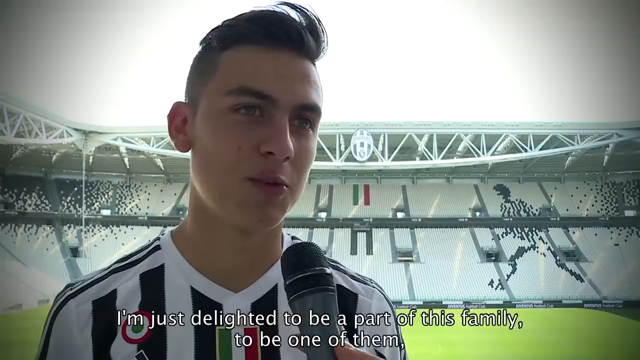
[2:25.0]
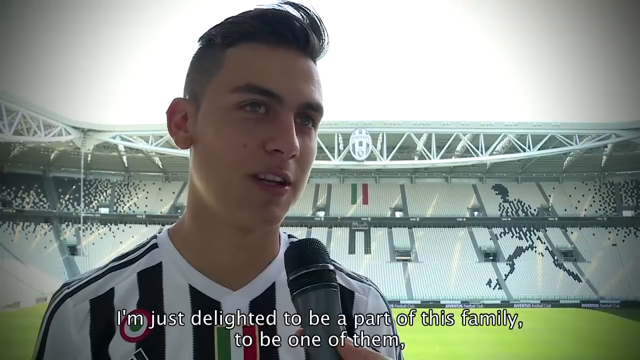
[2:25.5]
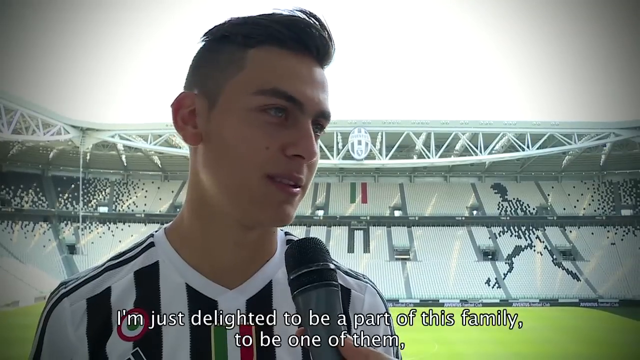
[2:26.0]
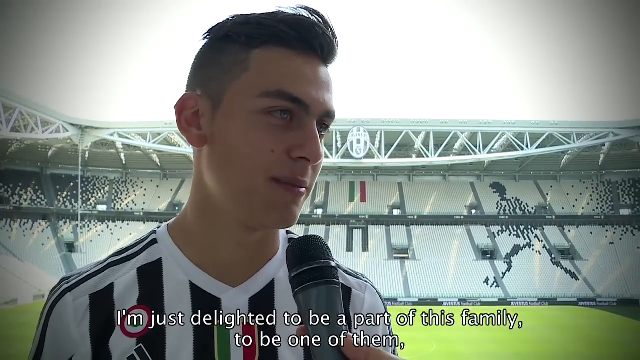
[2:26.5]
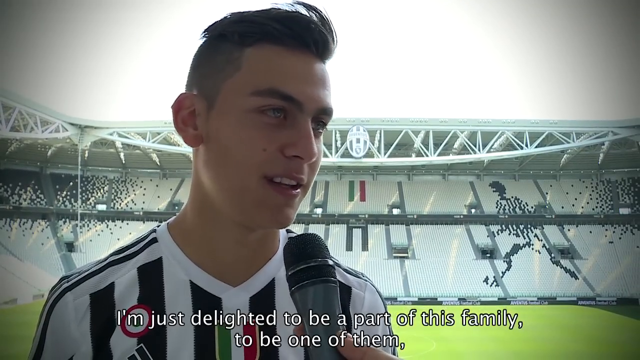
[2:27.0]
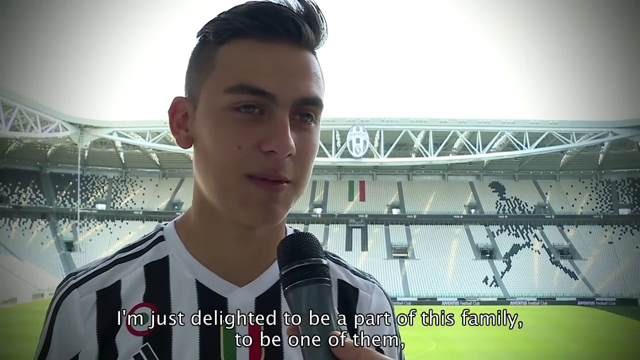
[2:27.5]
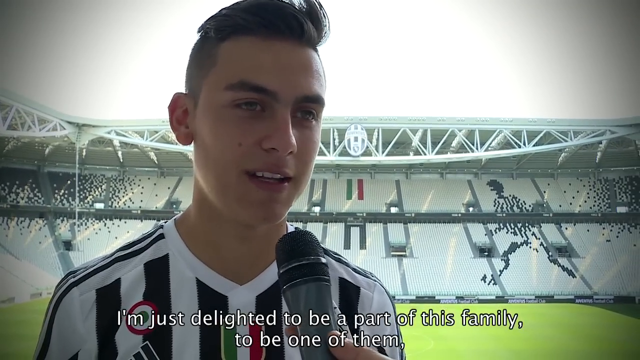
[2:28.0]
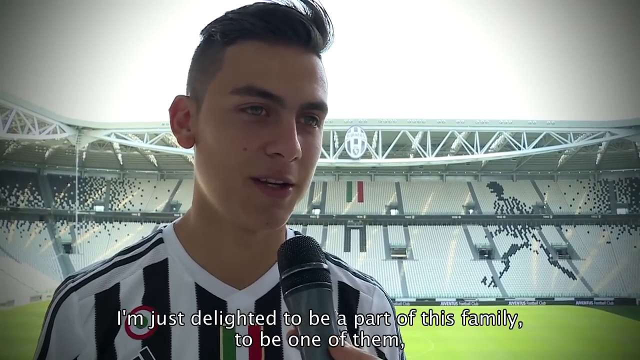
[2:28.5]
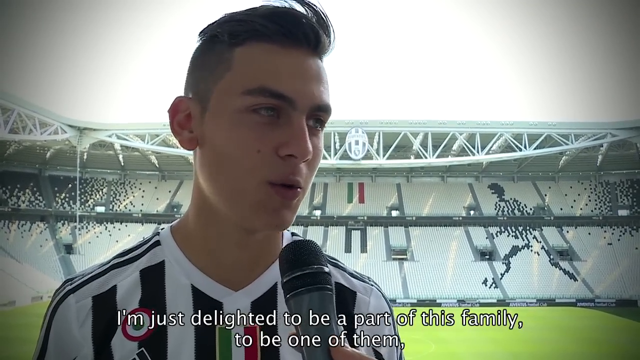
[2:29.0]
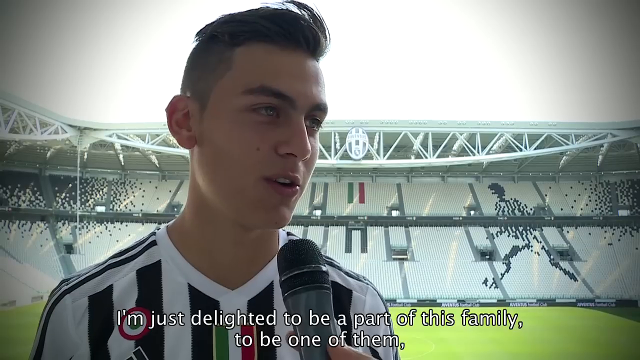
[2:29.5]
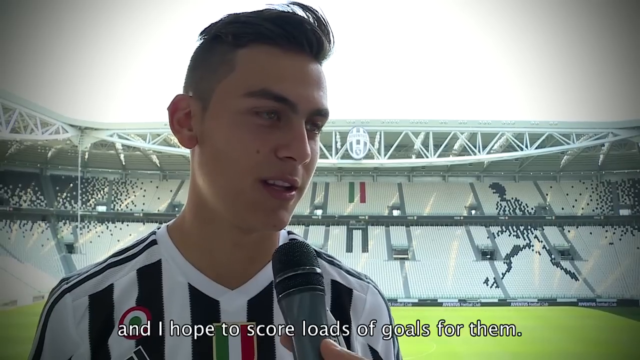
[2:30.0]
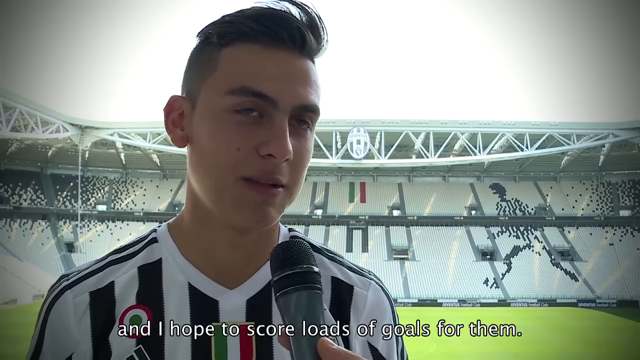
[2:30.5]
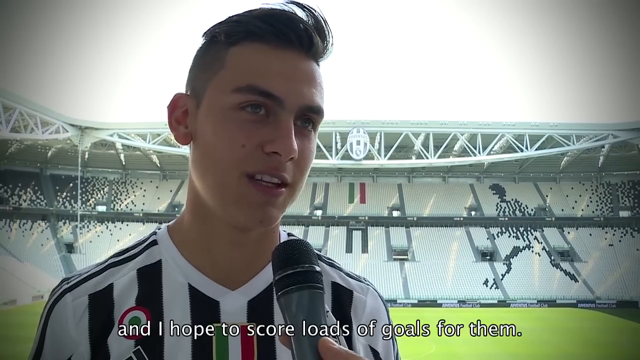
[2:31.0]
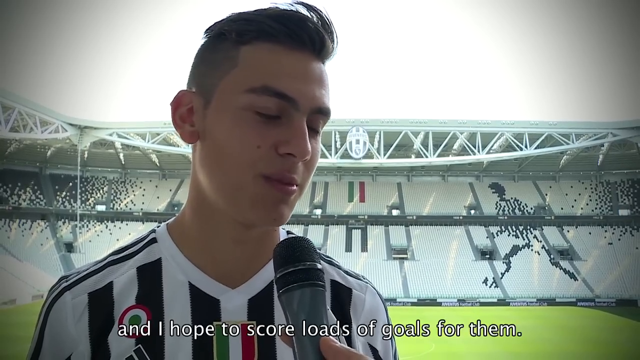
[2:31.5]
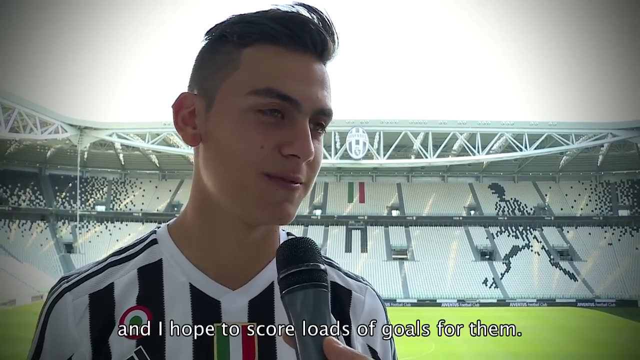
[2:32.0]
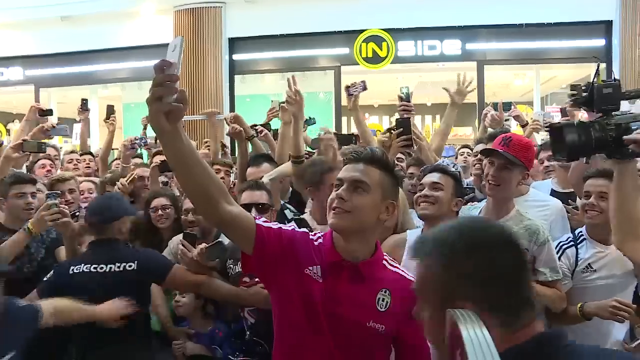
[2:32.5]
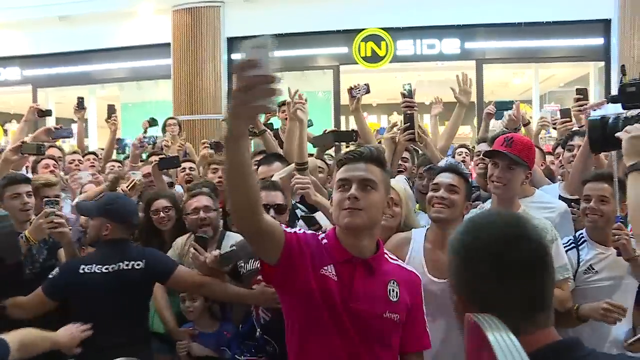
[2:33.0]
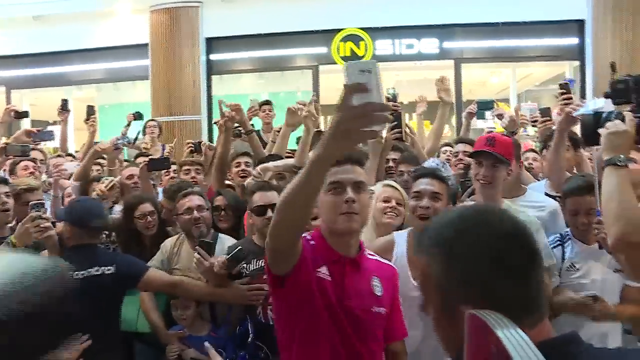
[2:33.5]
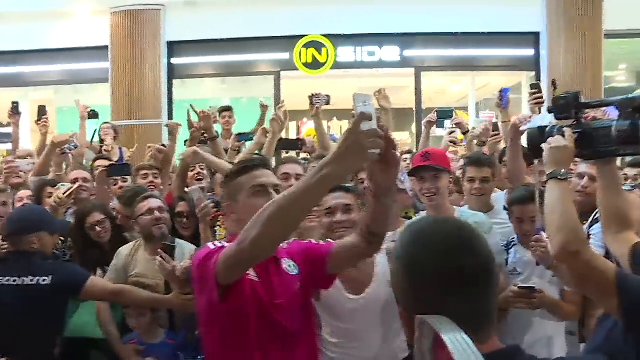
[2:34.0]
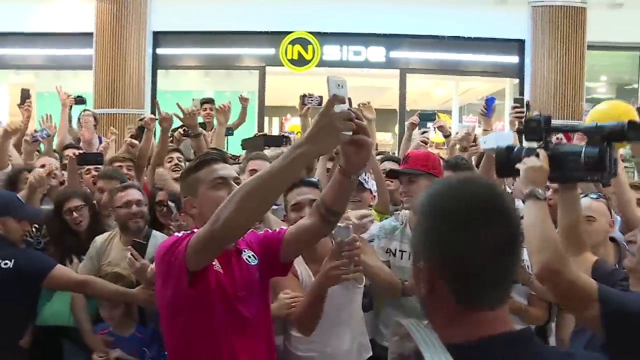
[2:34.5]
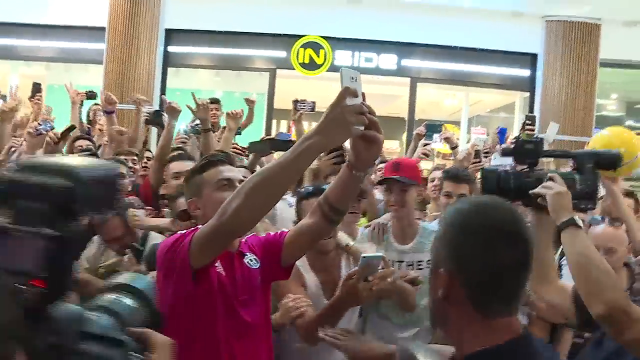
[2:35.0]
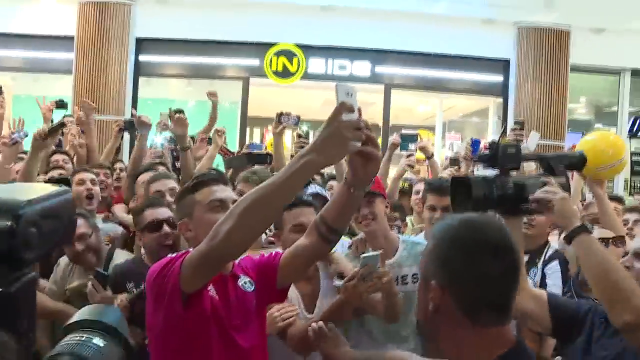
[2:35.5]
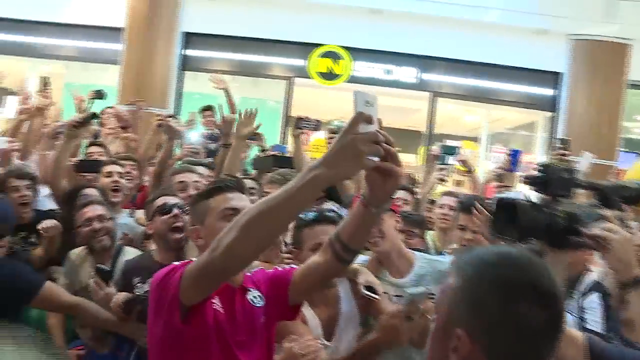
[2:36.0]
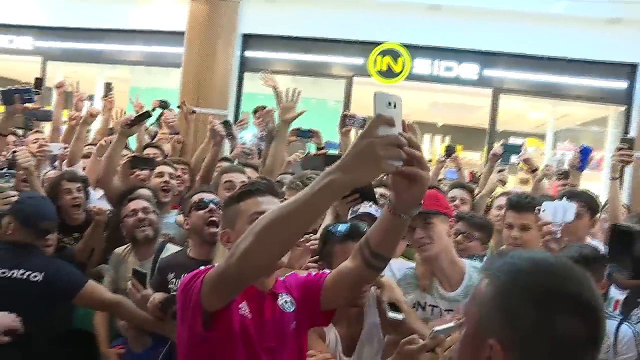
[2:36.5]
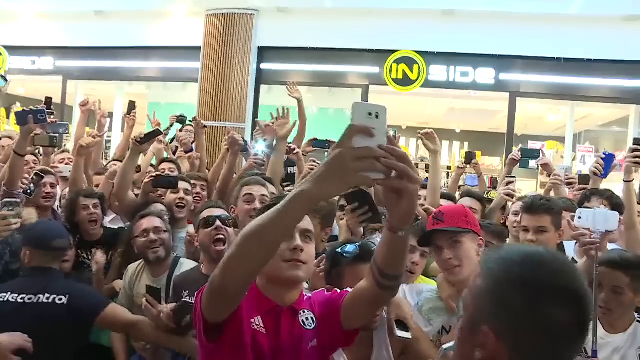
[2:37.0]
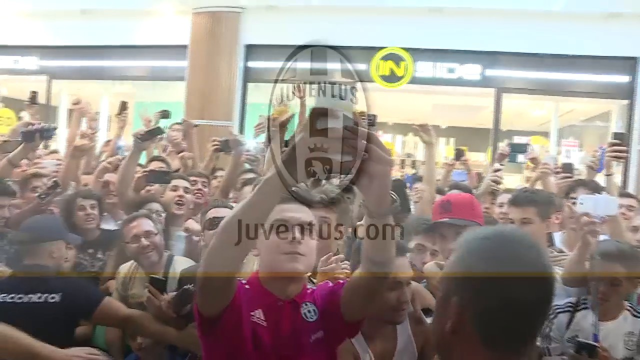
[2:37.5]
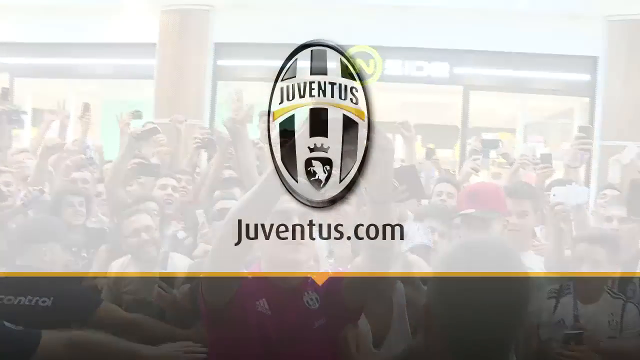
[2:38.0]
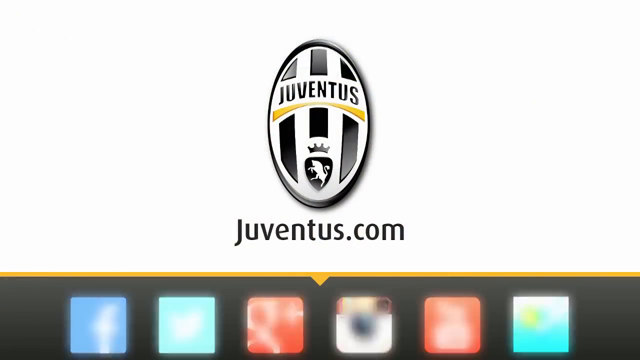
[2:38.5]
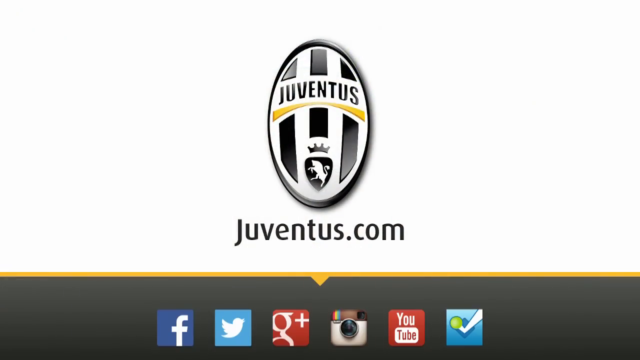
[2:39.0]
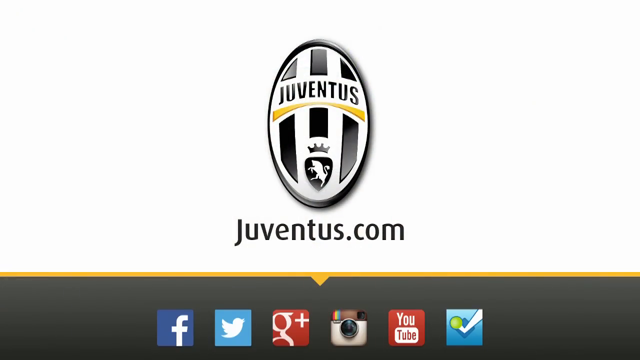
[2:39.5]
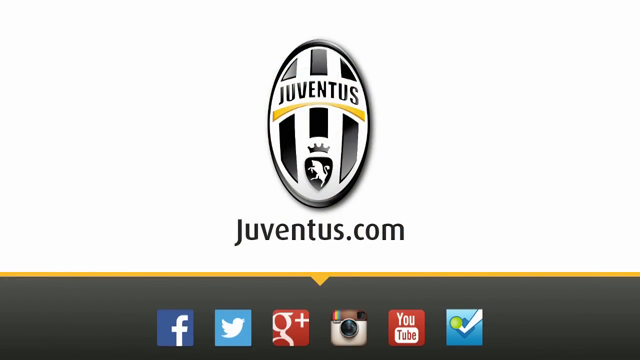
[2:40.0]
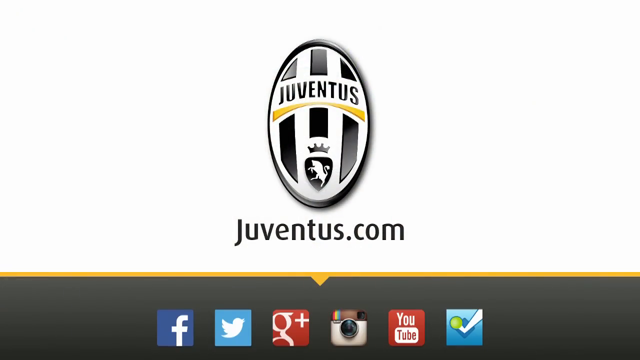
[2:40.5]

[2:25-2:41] He is back at the stadium, which is open with no roof. The Juventus logo is in the center of the soccer field, with the Italian flag shown below it. It appears to be a bright sunny day, though it appears very cloudy in what the camera shows. Paolo is then with several fans who shout, wave their hands and scream for his attention as he records a selfie video of them and himself, and they smile, cheer and laugh. The video ends with a Juventus.com slide showing the logo and crest.